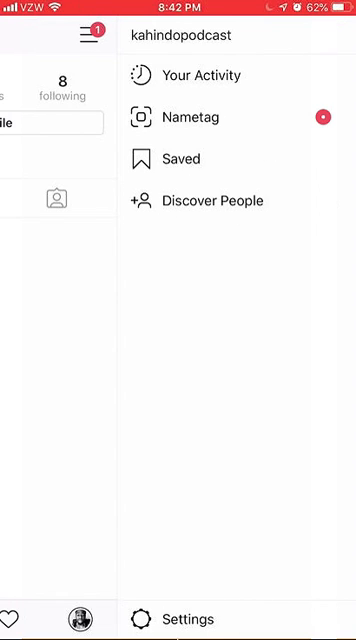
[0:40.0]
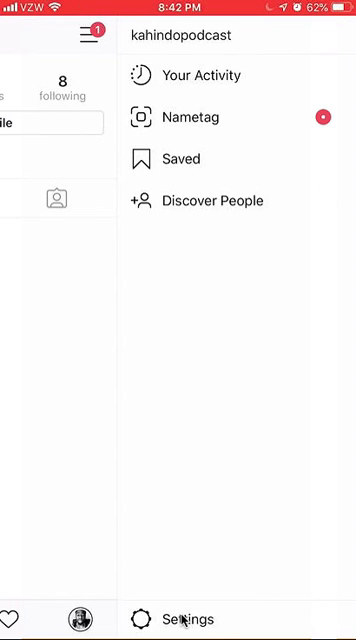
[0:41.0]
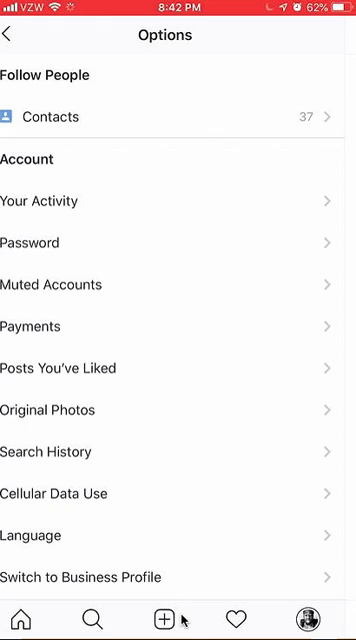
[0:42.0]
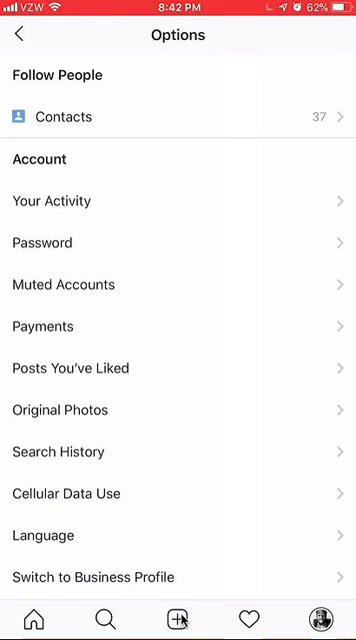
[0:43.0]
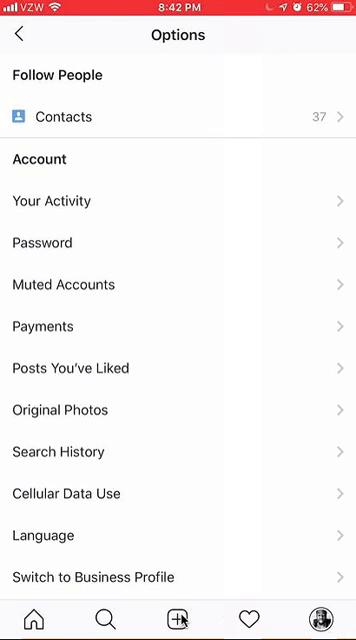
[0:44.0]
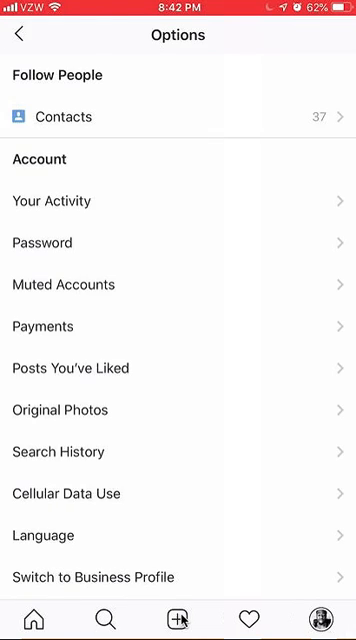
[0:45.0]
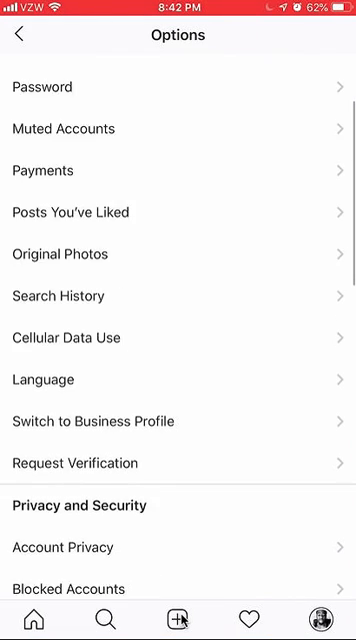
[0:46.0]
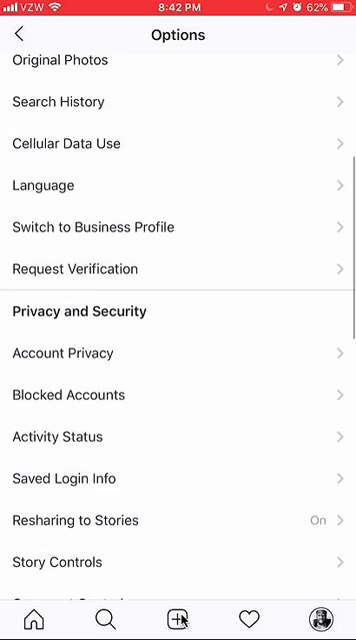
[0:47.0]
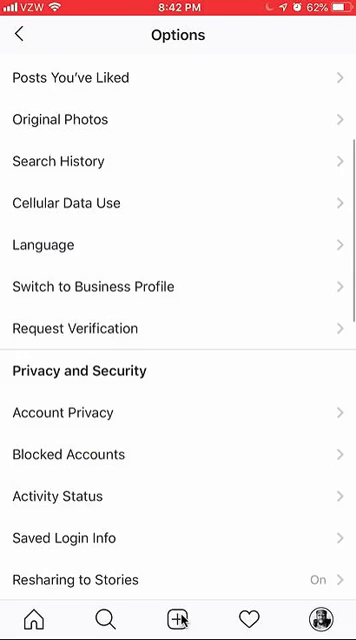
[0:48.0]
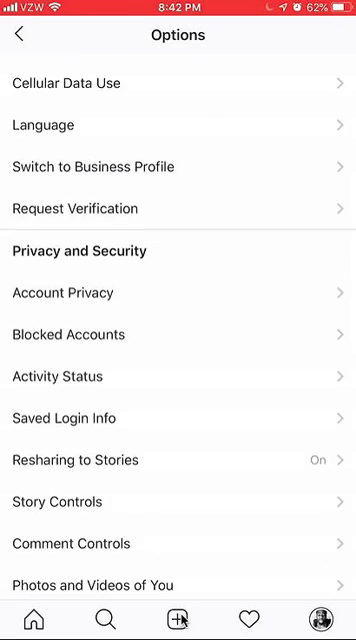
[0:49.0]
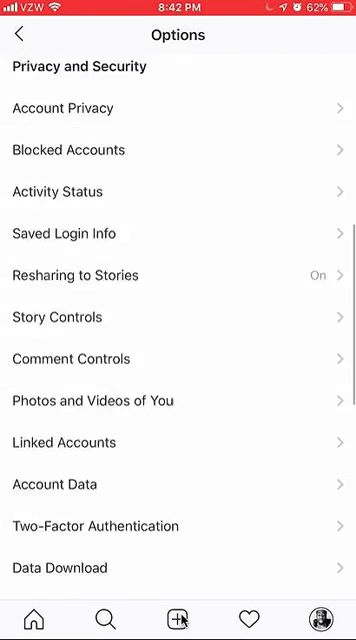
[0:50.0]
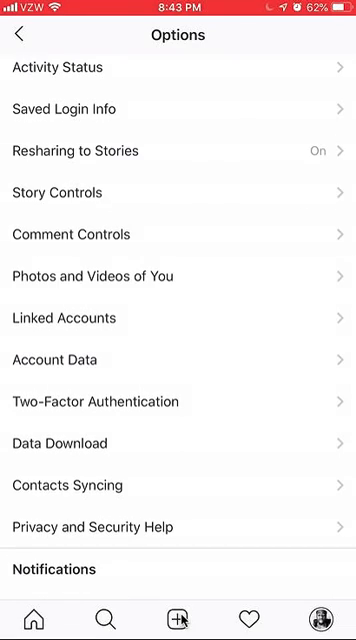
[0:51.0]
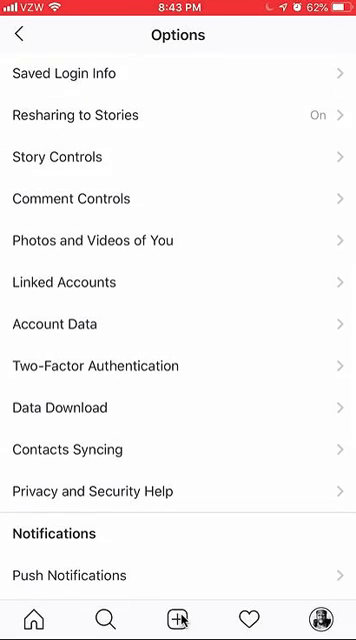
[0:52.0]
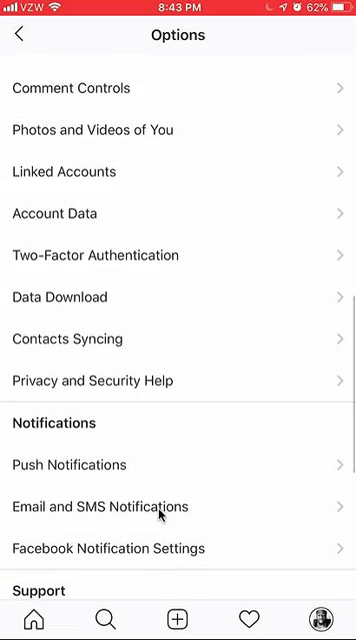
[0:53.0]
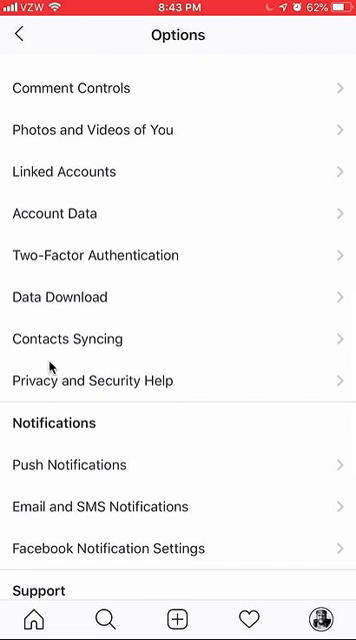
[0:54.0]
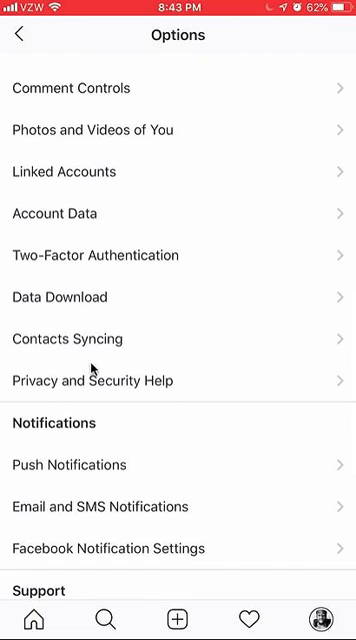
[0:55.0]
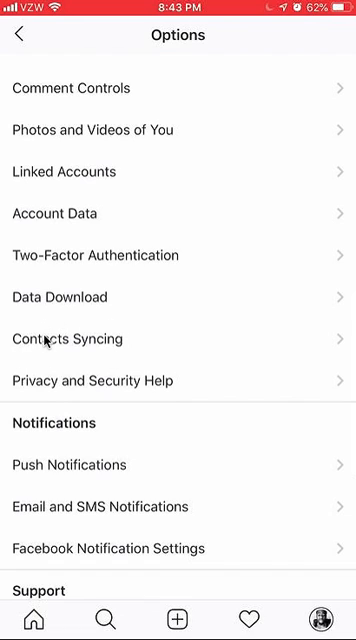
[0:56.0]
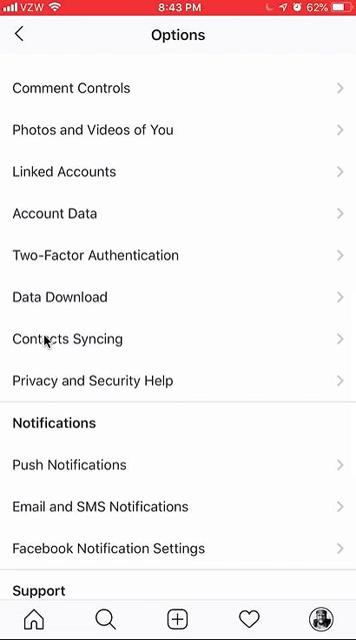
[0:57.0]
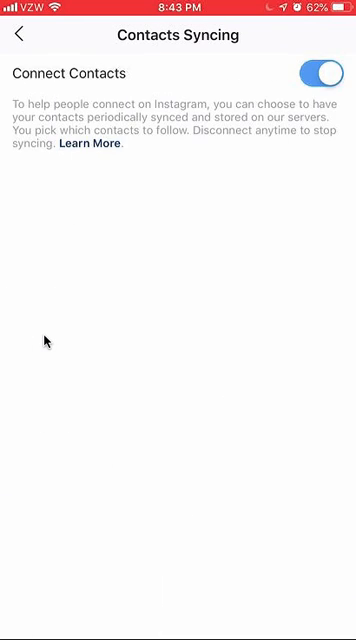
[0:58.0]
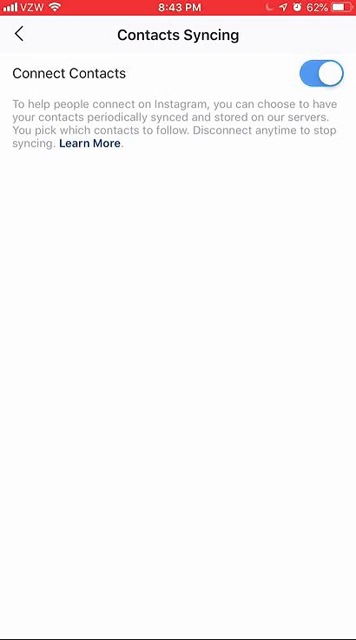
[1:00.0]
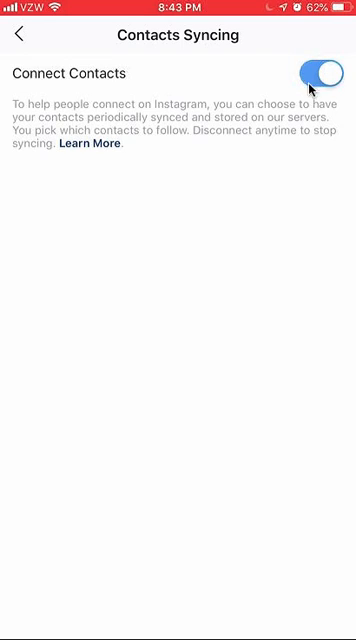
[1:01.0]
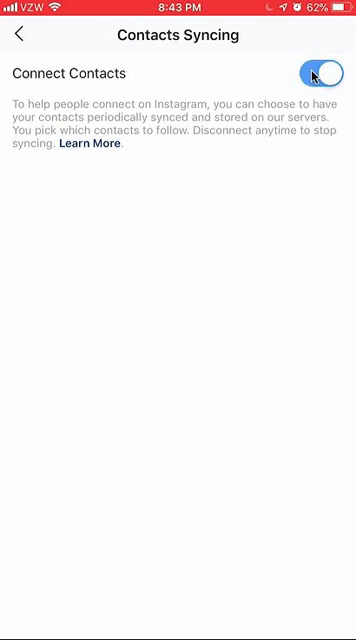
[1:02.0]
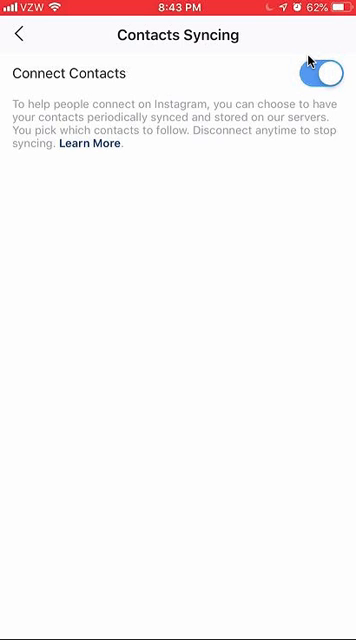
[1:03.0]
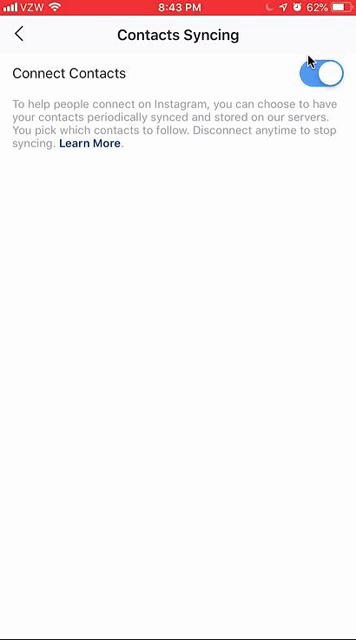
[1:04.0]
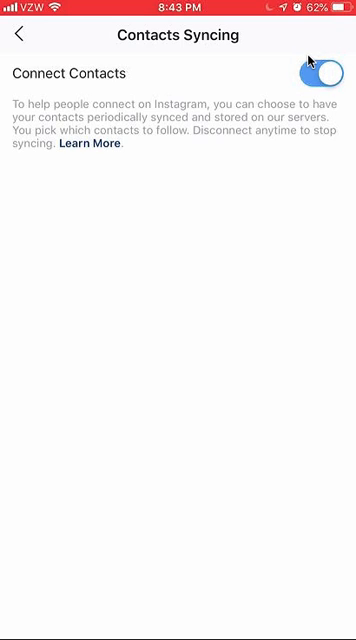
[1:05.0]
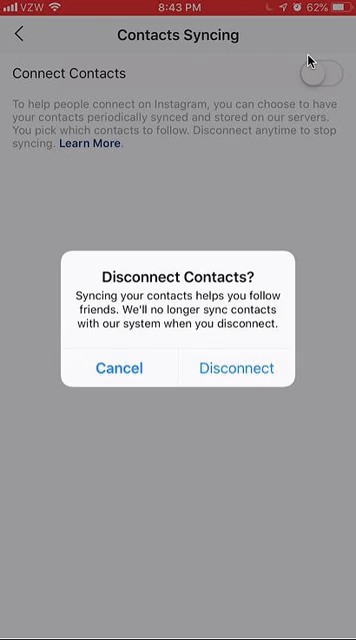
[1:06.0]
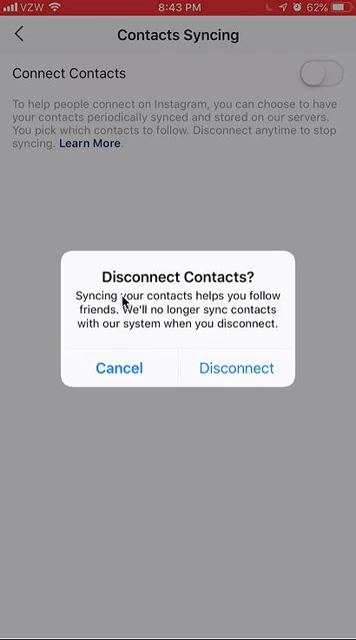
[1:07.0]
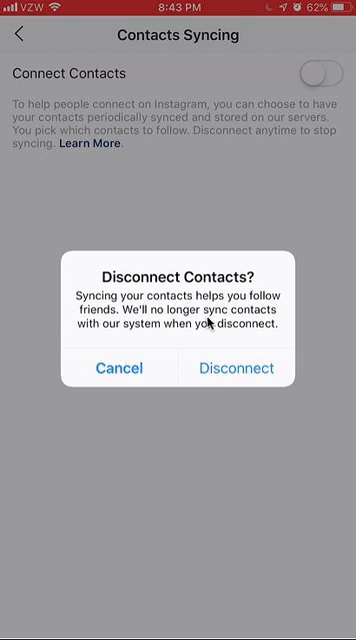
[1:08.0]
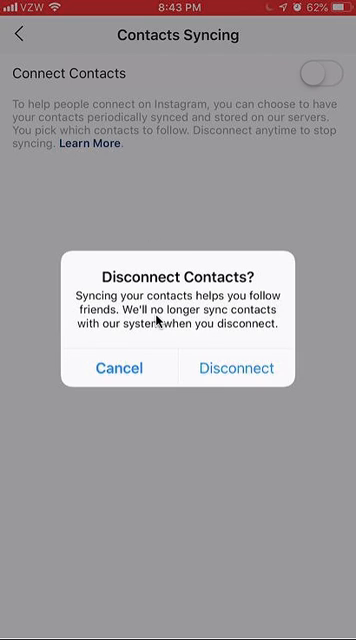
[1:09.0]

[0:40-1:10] The iPhone screen shows the settings page of the Khindo podcast. There appear to be several icons at the top, including three parallel lines, apparently the settings icon, which seems to have a red circle with the number one, indicating one item that needs attention. Going down vertically from the center of the screen, the menu shows the words "Khindo podcast"; a clock icon with one quadrant of its circle dotted, next to the words "your activity"; "nametag", which has a red dot next to it in the same color as the red circle on the settings icon, so this is perhaps the item needing attention; a bookmark icon next to the word "saved"; and a plus icon next to a person icon, with the words "discover people" to the right. The cursor clicks and the menu changes to the Options menu, which says "Follow People". It lists contacts with 37 contacts, and other options such as Account, Your Activity, Password, Muted Accounts, Payments, Posts You Liked, Original Photos, Search History, Cellular Data Use, Language, and Switch to Business Profile. Scrolling down reveals more options: request verification, privacy and security, account privacy, blocked accounts, activity status, save login info, resharing to stories (marked on), story controls, photos and videos of you, linked accounts, account data, two-factor authentication, data download, contact syncing, Privacy and Security Help, Notifications, Push Notifications, Email and SMS Notifications, Facebook Notification Setting, and Support. The cursor circles contact syncing and clicks it. On the contact syncing page, "connect contacts" has a white switch on a blue background, turned on. Below is an explanation that reads "to help people connect on Instagram, you can choose to have your contacts periodically synced and stored on our servers. You pick which contacts to follow. Disconnect any time to stop syncing," followed by "learn more". The user turns off connect contacts, and a "disconnect contacts" modal window appears asking for verification. It reads "syncing your contacts helps you follow friends. We'll no longer sync contacts with our system when you disconnect."